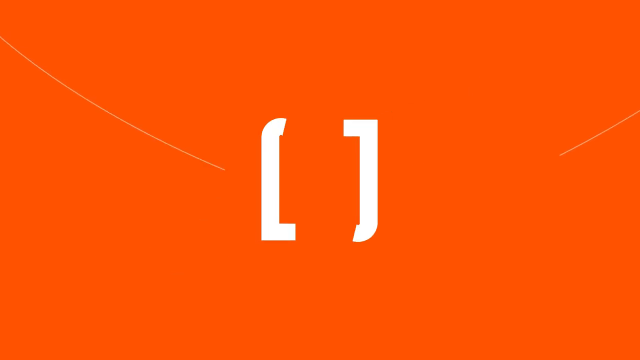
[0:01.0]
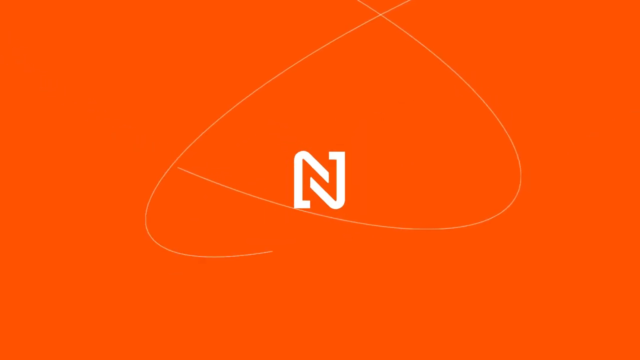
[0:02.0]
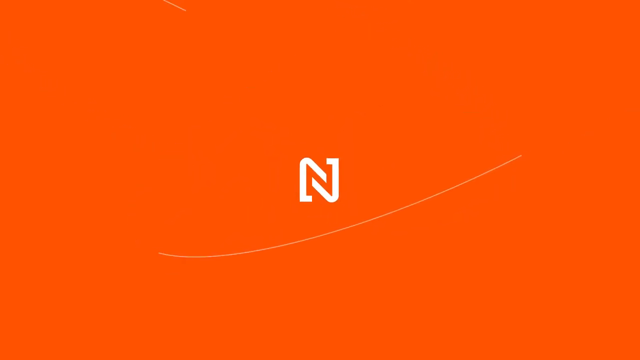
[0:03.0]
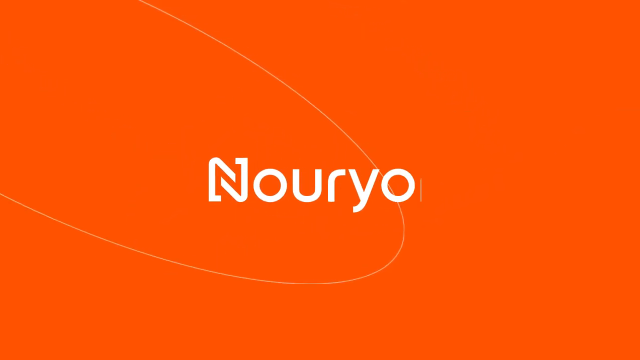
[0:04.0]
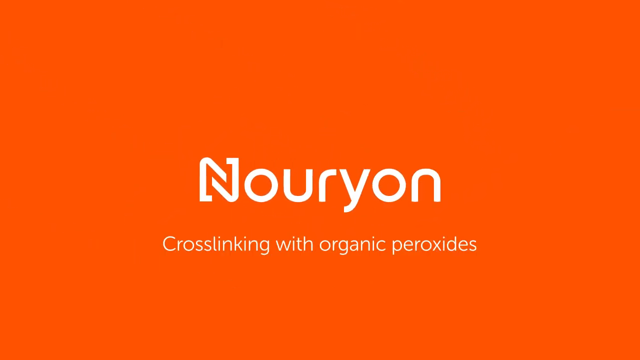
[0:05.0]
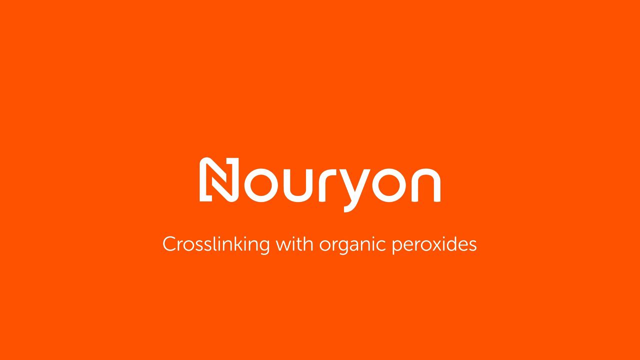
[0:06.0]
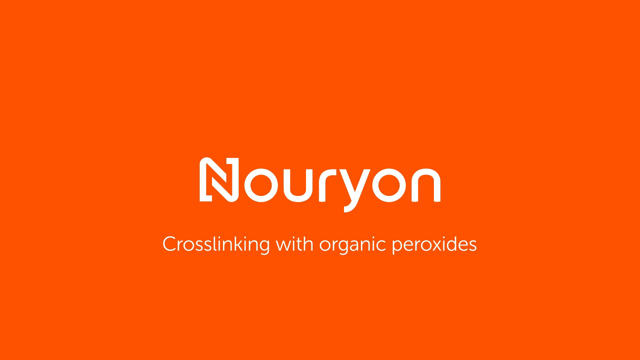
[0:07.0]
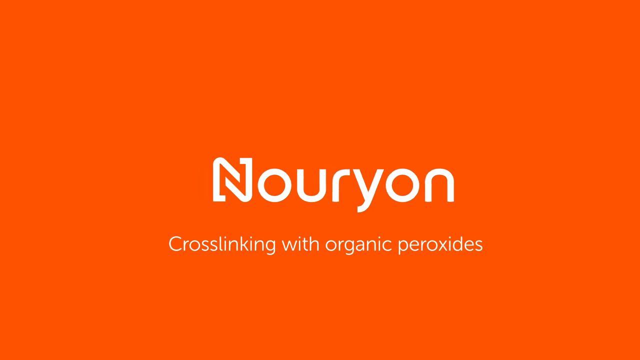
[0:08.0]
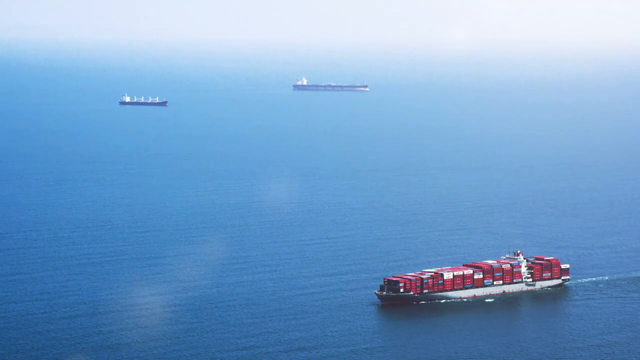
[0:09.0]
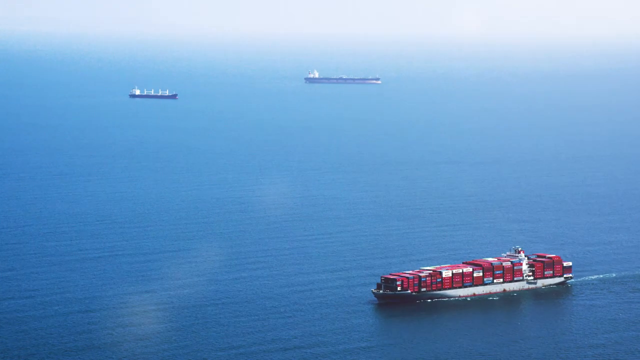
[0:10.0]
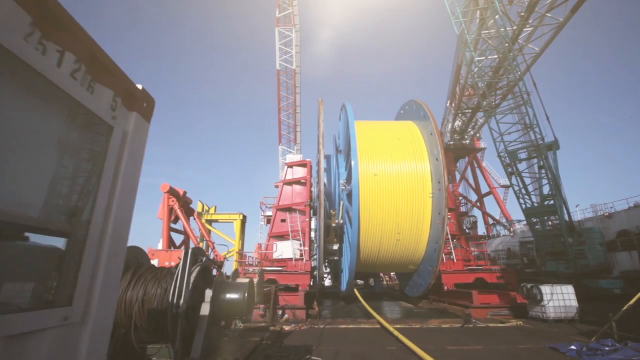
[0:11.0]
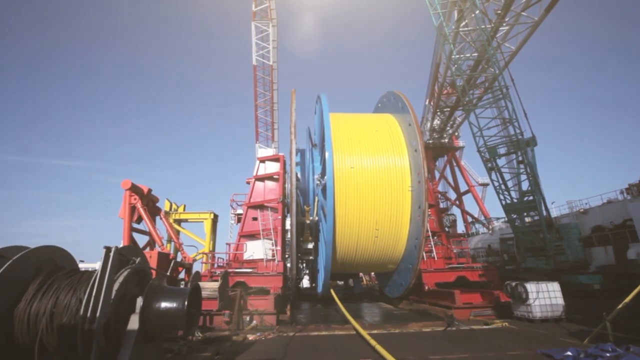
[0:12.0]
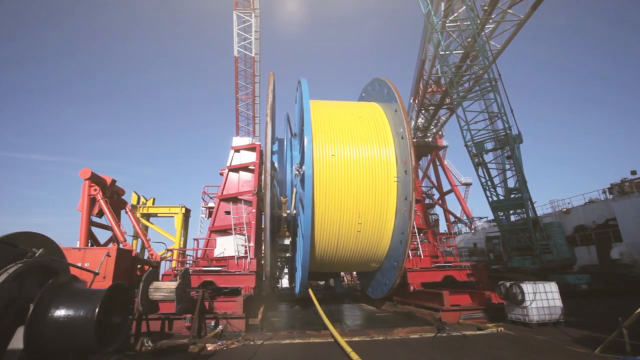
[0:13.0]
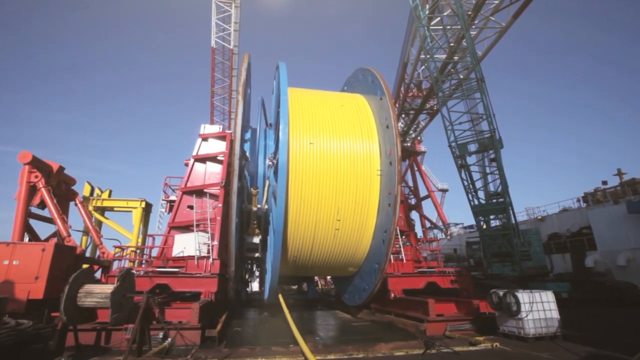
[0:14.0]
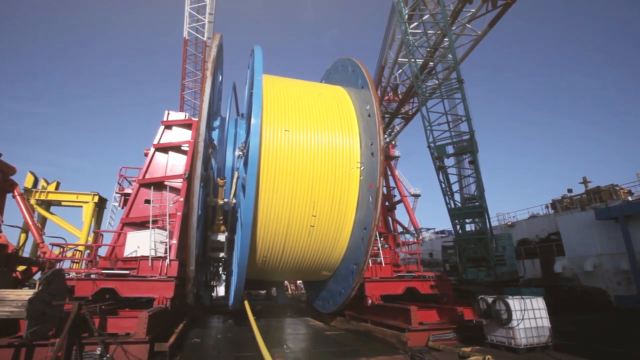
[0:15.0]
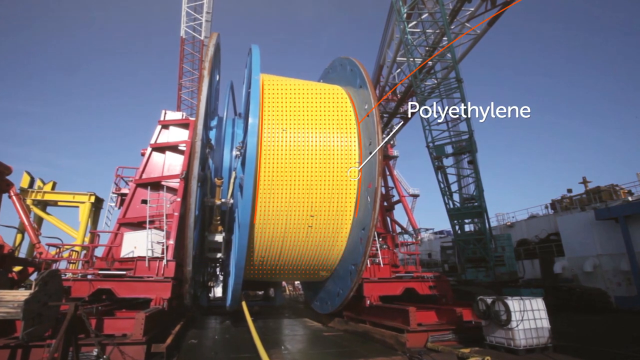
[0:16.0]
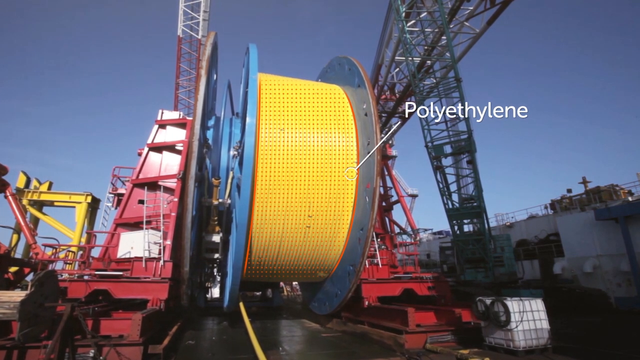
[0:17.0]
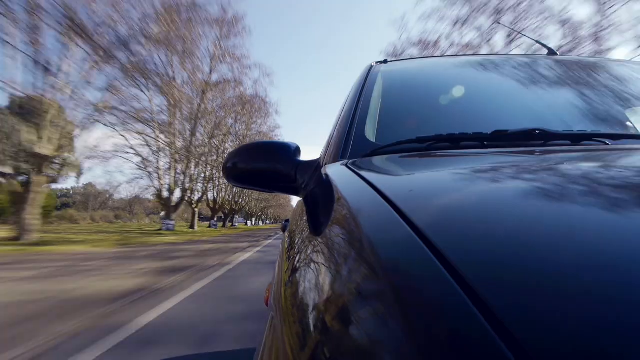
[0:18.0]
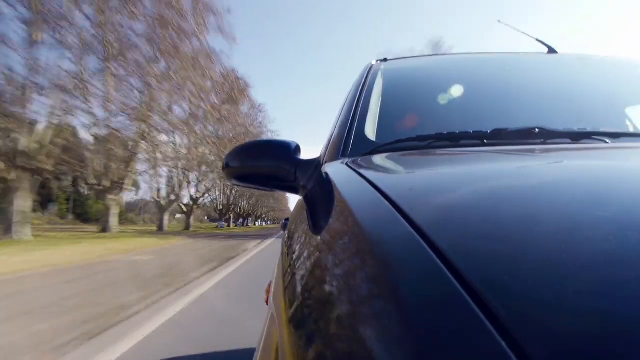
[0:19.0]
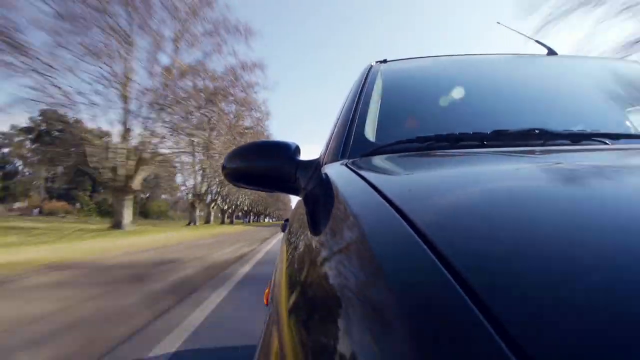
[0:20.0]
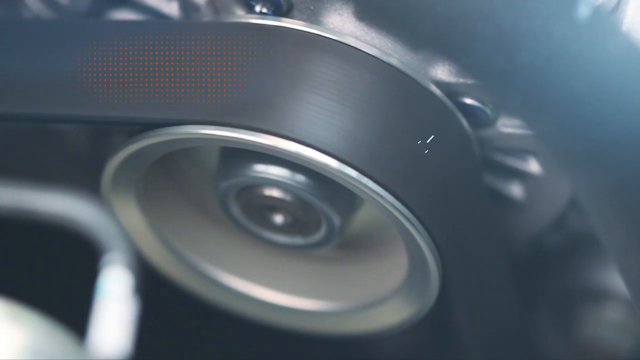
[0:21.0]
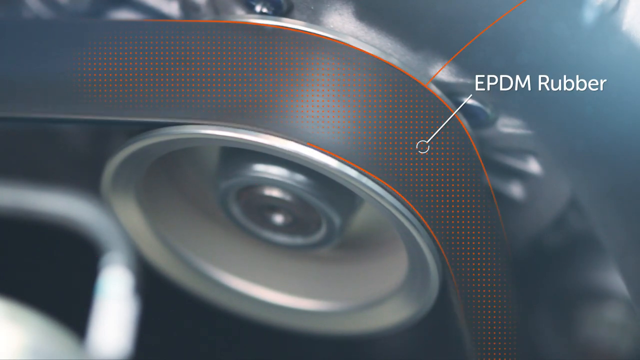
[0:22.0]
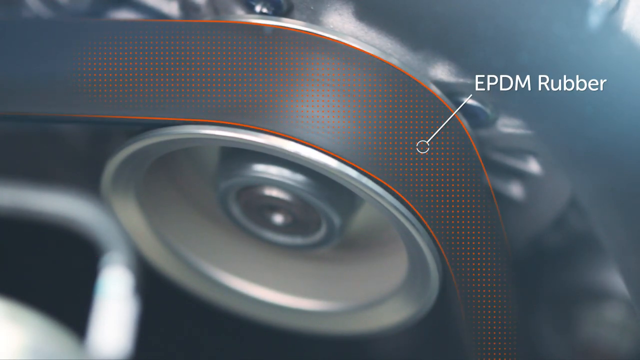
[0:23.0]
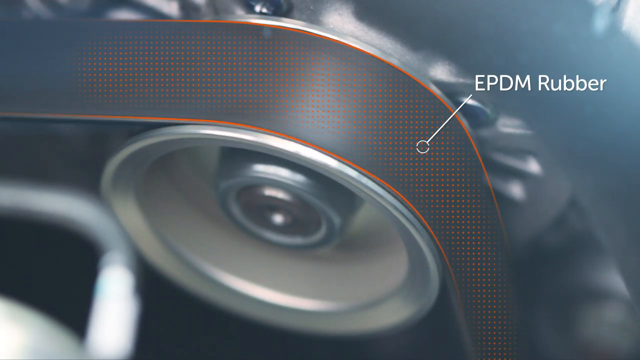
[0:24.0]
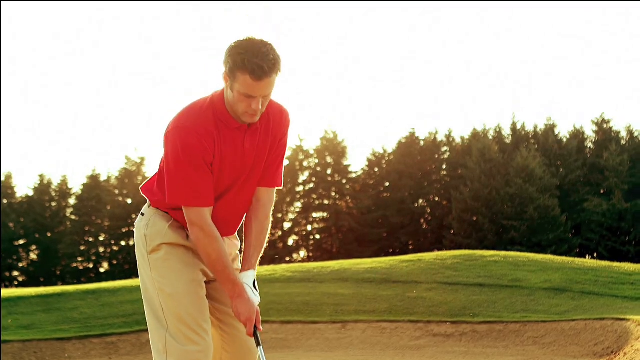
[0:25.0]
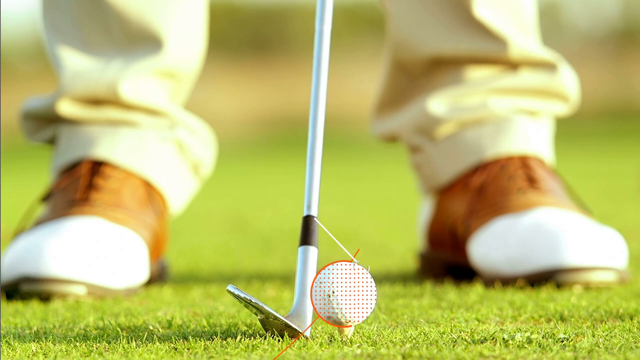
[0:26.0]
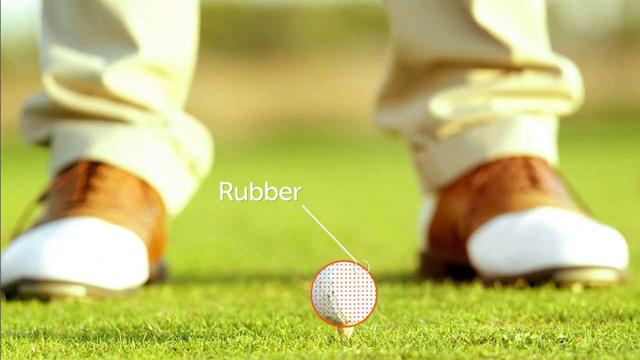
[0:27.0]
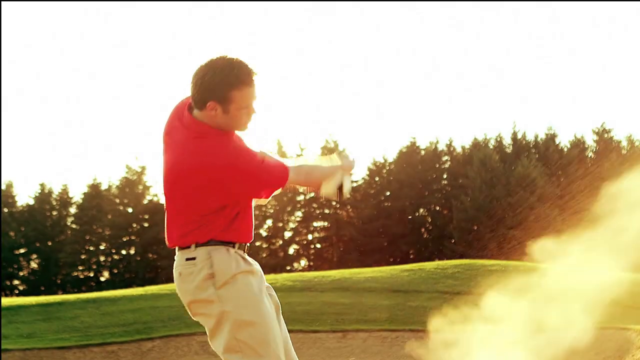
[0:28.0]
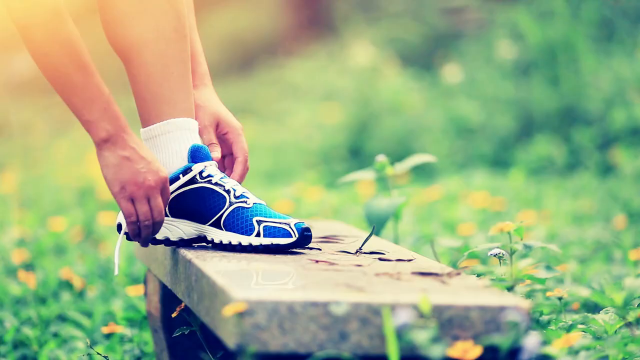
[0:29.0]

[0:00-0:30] The screen is bright orange, and in the middle appears the word "NOURYOR" in white. Underneath it, also in white, the text reads "cross-linking with organic peroxides." Next the ocean appears, with a freight liner carrying a whole bunch of cargo; two other ships are visible in the background. A large roll of yellow hose comes into view, the video freezes, and an arrow rises off the hose with "polyethylene" written in white at its tip. A car is then shown driving. Another shot shows a metal pulley spinning with a black belt going around it; an arrow comes off the black belt, and at its tip it says "EPDM rubber." A person golfing appears, wearing a red shirt and light tan khakis and holding a golf club. He puts the club down on the ground in front of a golf ball, and an arrow comes up off the golf ball with "rubber" at its end.